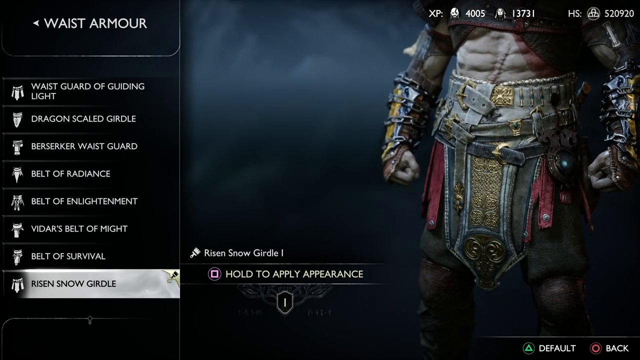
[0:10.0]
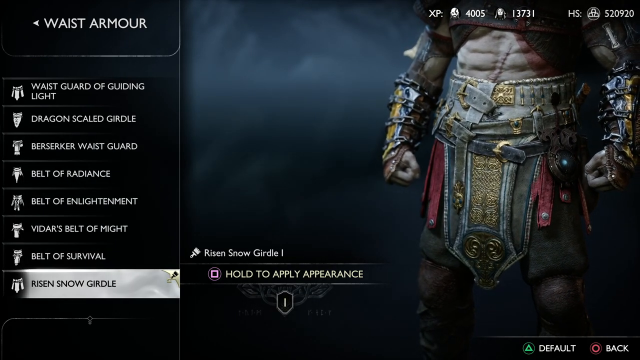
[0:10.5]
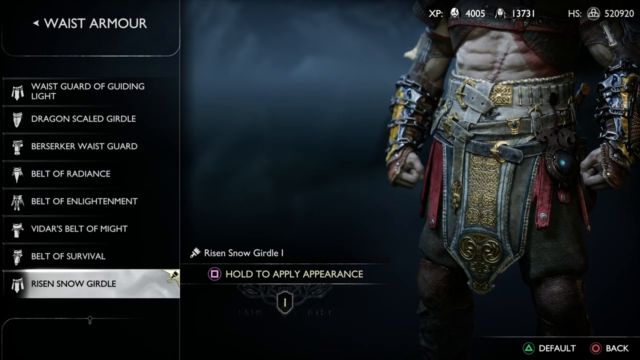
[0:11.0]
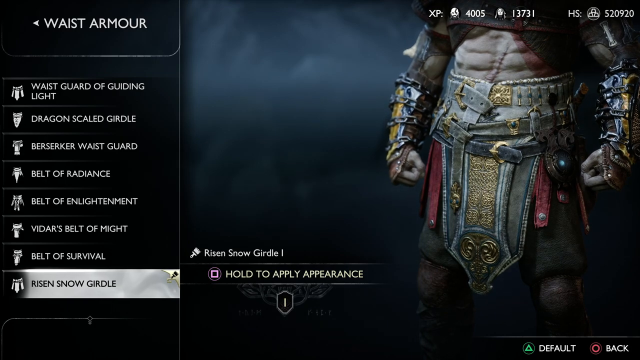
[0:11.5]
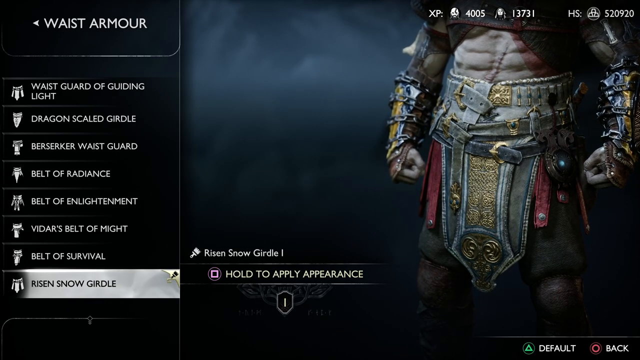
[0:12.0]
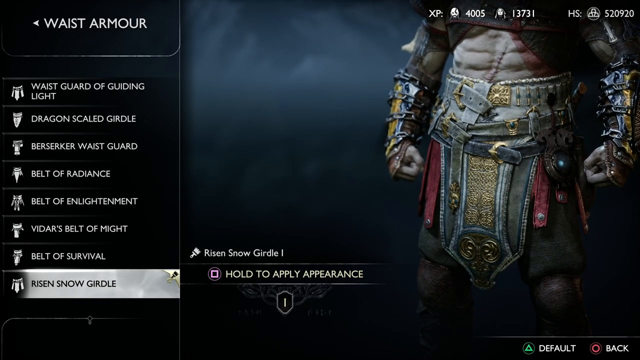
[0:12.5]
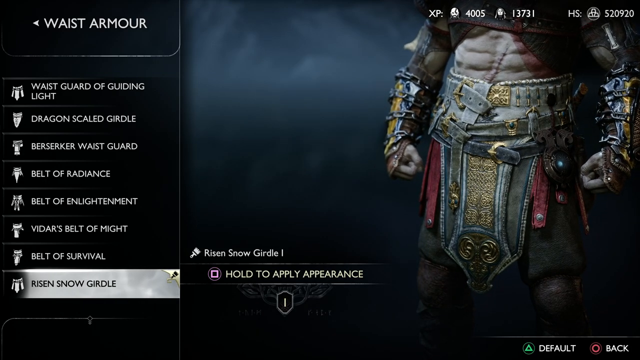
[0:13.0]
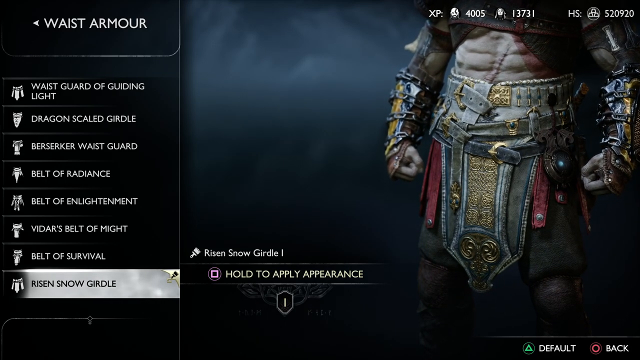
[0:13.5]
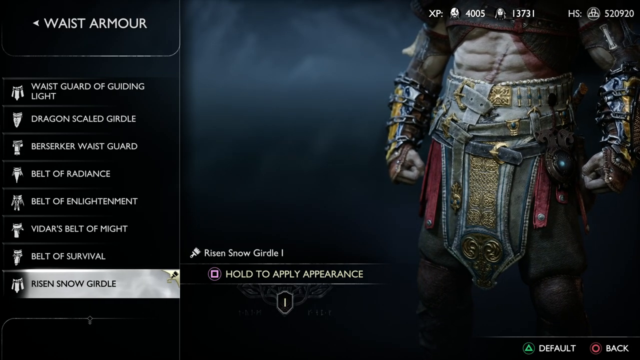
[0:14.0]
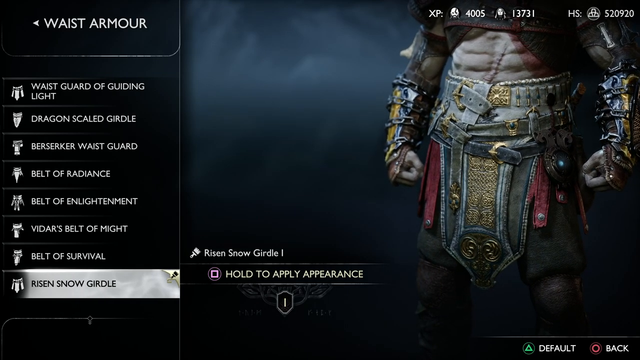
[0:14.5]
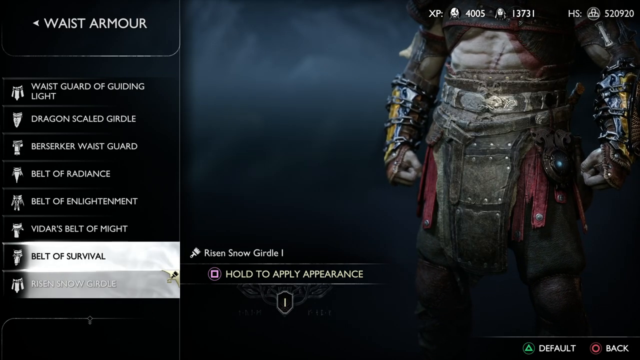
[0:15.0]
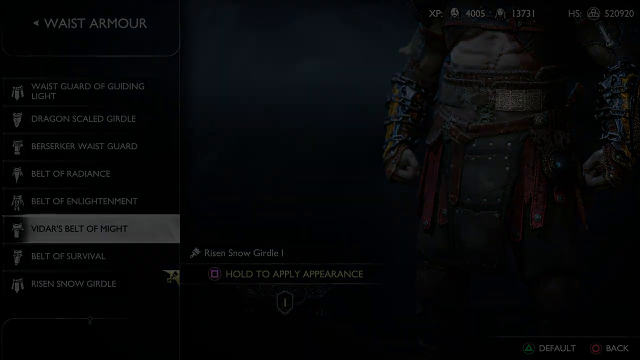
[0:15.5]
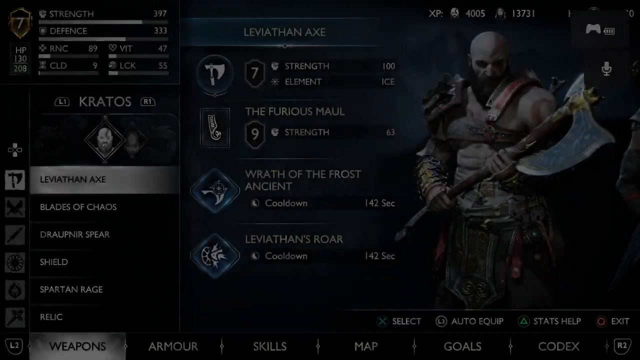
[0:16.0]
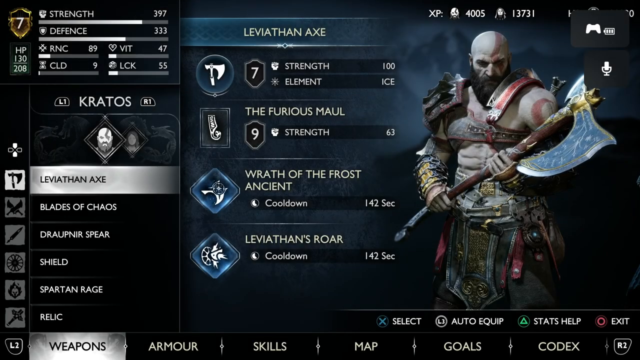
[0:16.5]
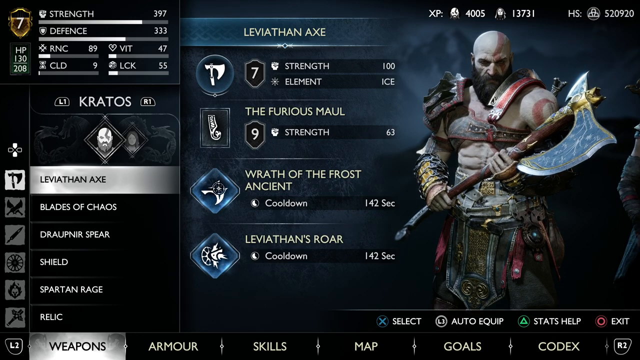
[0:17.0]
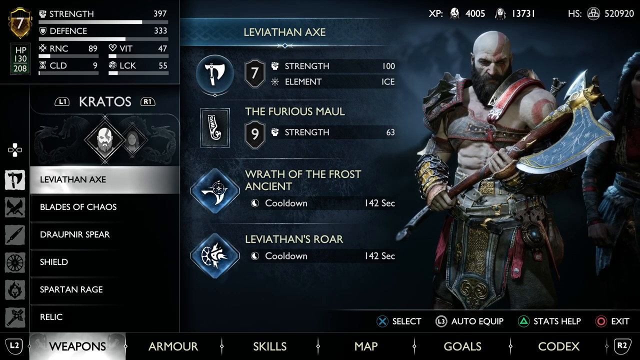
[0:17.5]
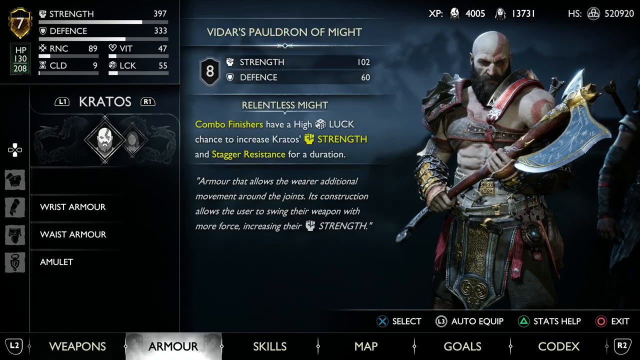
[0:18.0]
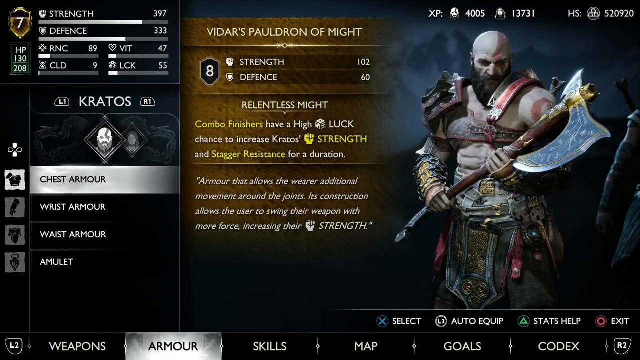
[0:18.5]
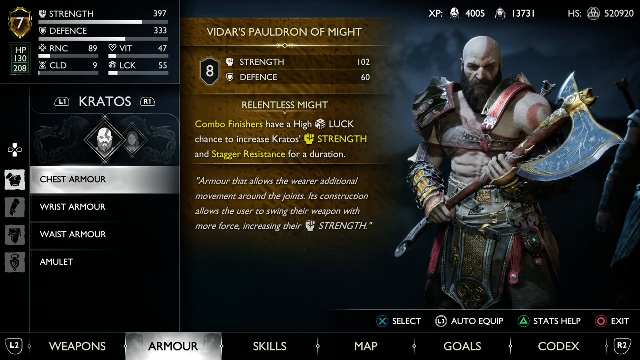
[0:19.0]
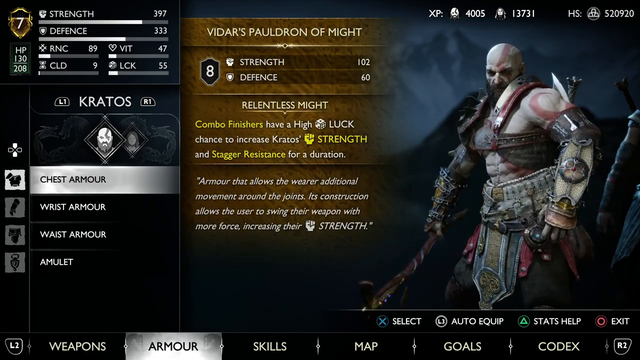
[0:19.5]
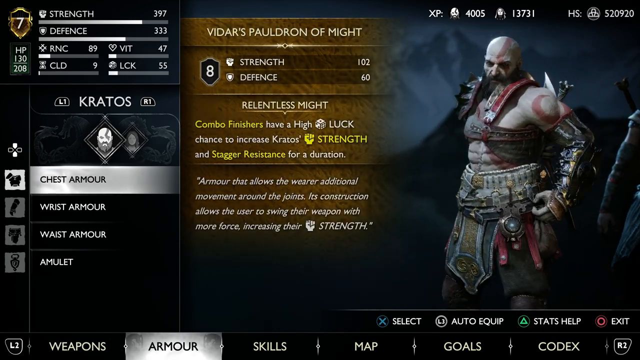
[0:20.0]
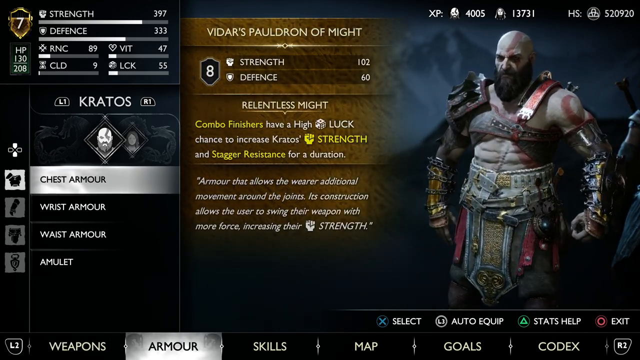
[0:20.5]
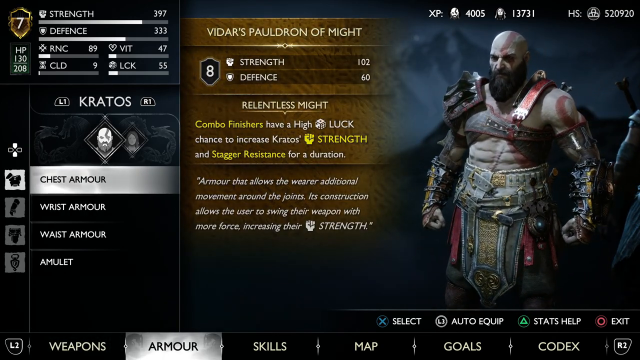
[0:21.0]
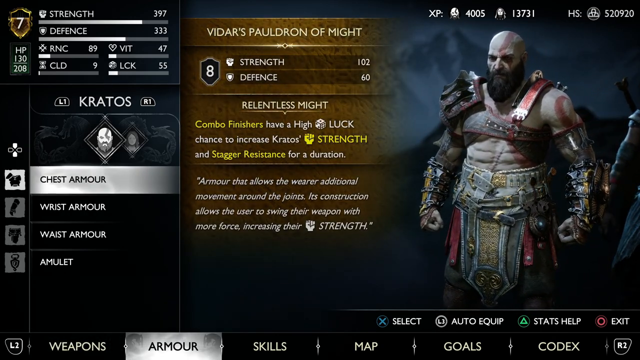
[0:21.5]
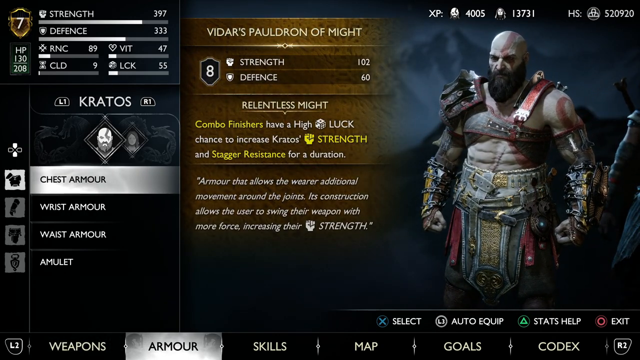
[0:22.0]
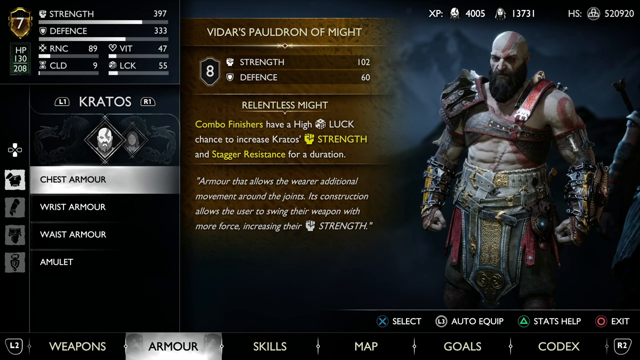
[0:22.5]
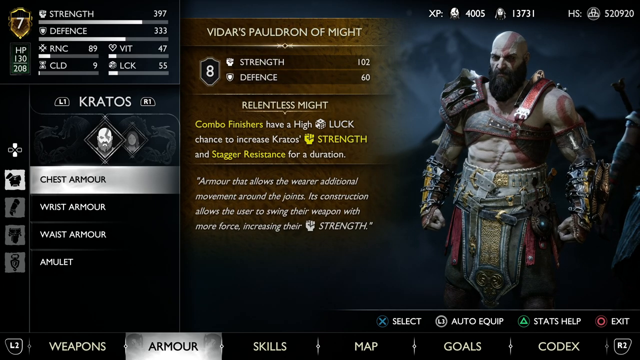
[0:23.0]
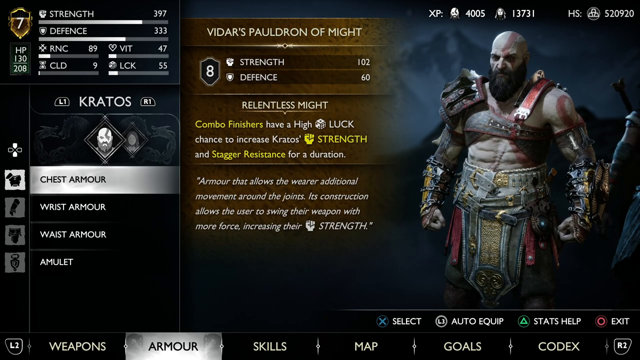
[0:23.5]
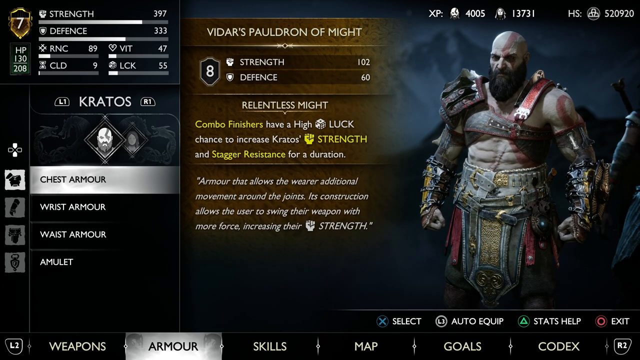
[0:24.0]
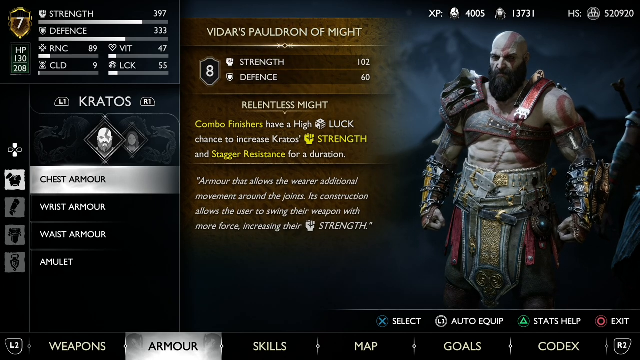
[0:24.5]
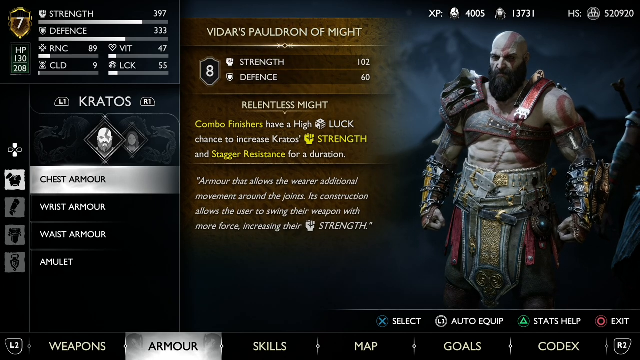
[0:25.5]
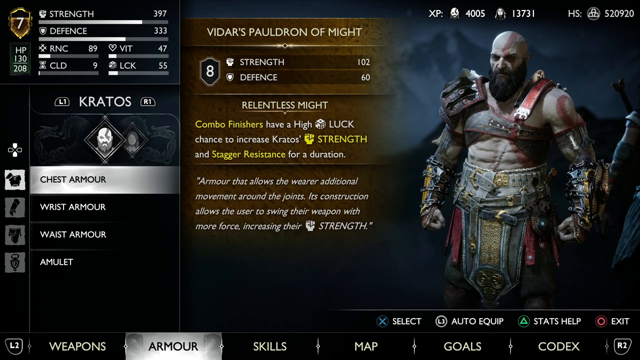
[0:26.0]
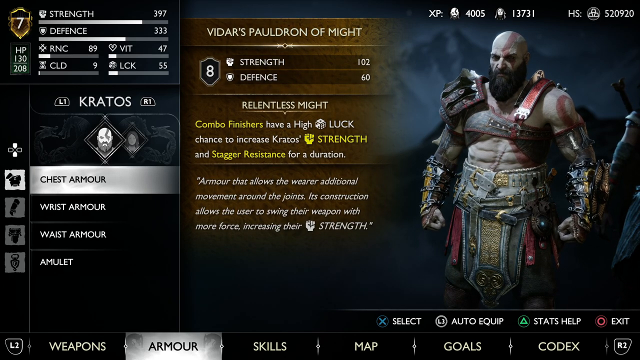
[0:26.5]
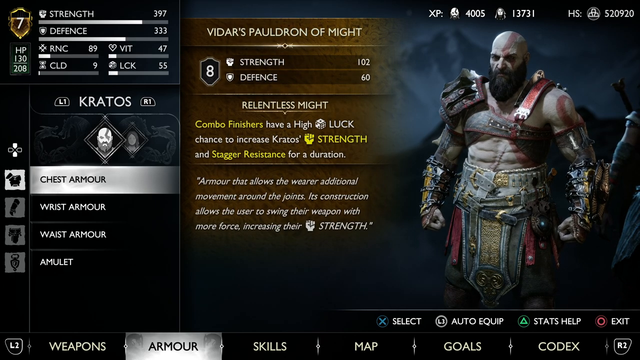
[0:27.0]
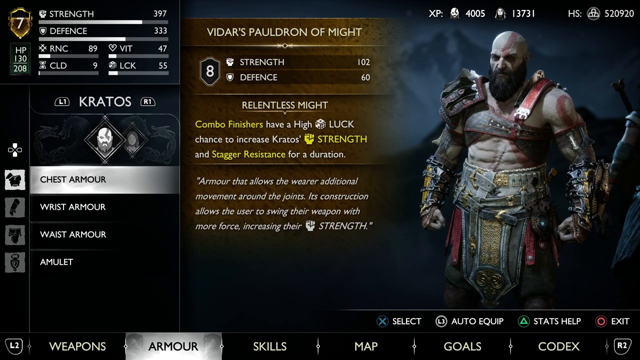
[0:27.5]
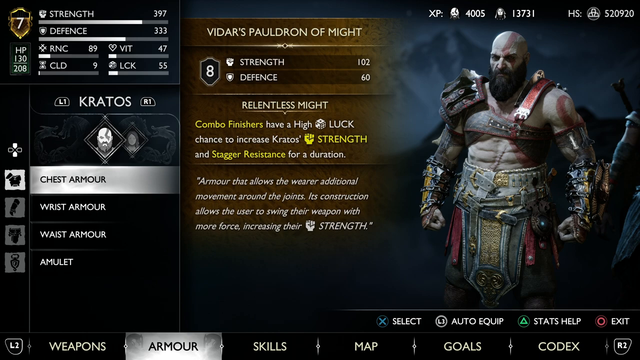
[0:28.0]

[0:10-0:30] The player scrolls through a customization menu, apparently outfitting his character with new clothing or armor options. At the top left are the words "waist armor," and on the left side he scrolls through a list of possible waist armors. The scene then transitions to what appears to be another character customization menu, where the character Kratos seems to be equipped with different armaments. The player first hovers over the Leviathan Axe. On the right side of the screen, Kratos holds the Leviathan Axe to preview how it looks, and in the middle of the screen are the axe's stats: its strength number, its element, some upgrades that have been added to it, and other characteristics.